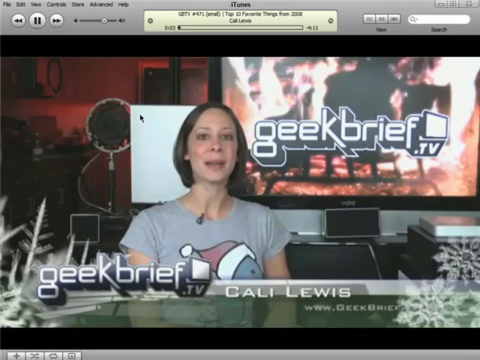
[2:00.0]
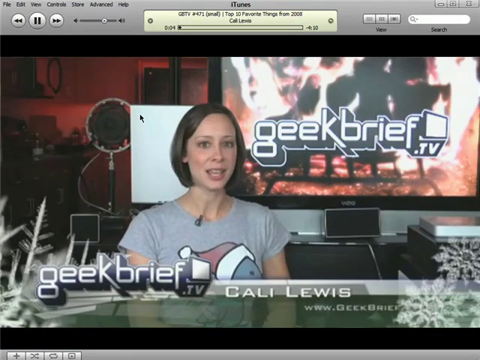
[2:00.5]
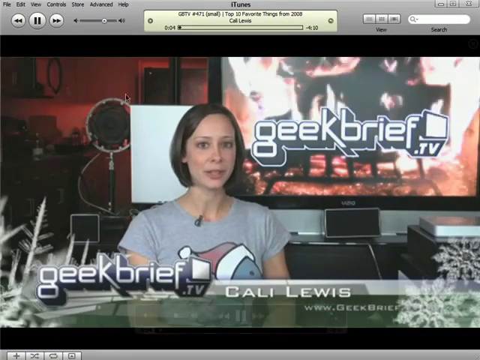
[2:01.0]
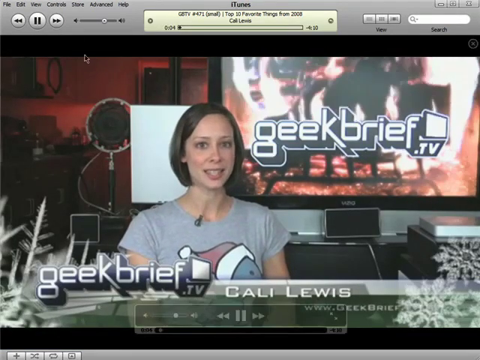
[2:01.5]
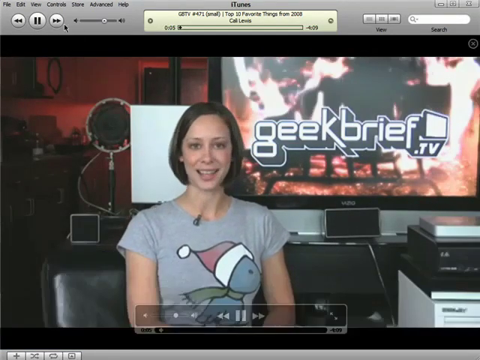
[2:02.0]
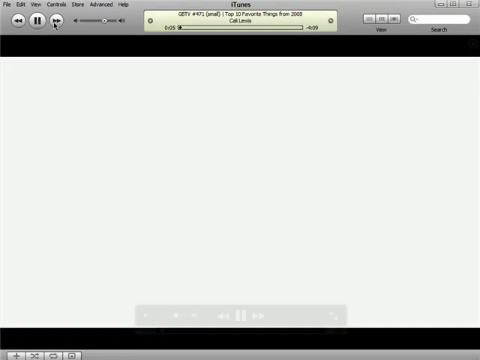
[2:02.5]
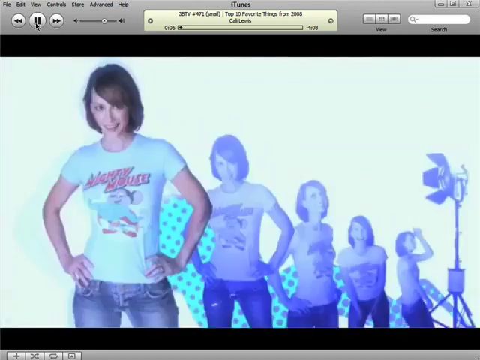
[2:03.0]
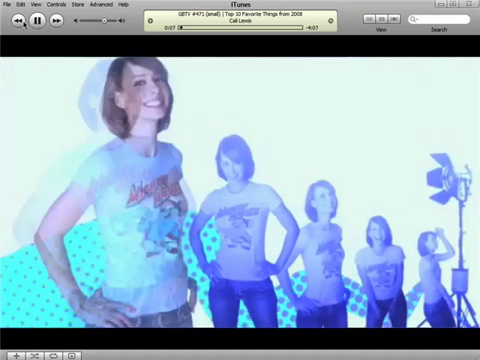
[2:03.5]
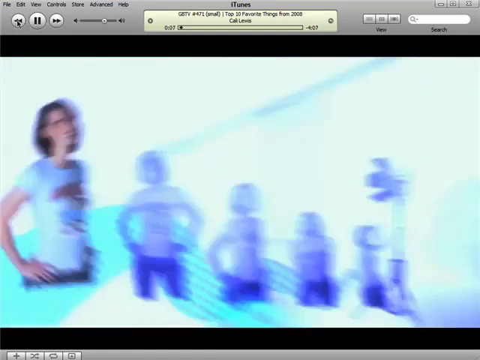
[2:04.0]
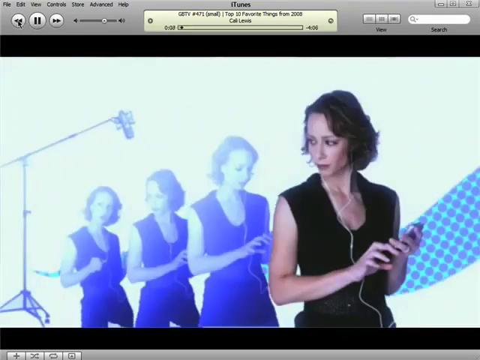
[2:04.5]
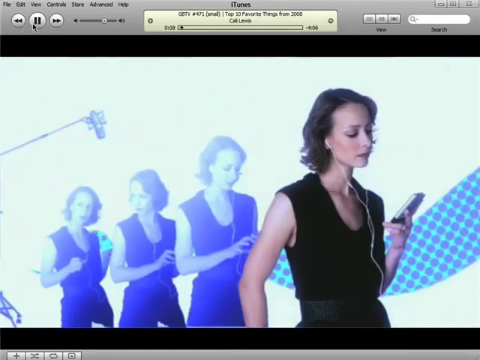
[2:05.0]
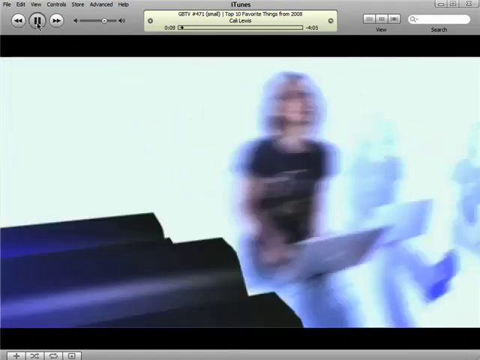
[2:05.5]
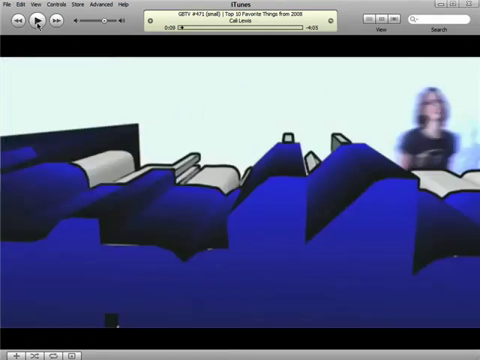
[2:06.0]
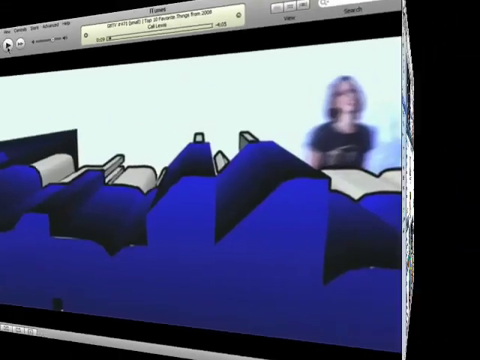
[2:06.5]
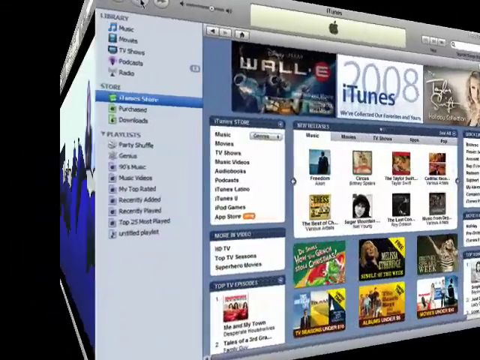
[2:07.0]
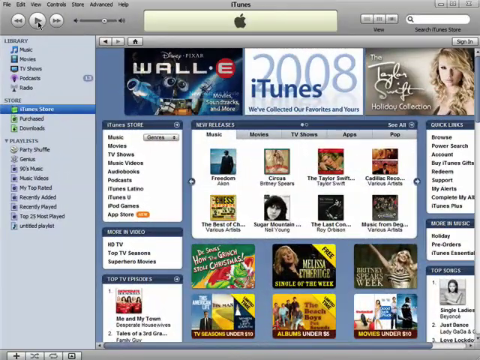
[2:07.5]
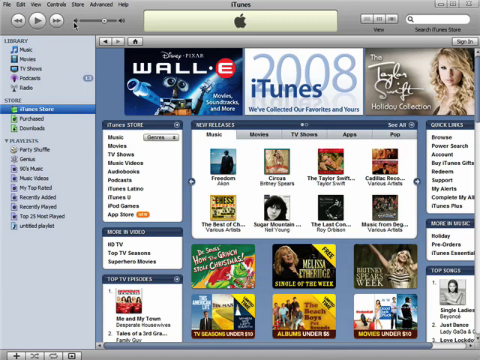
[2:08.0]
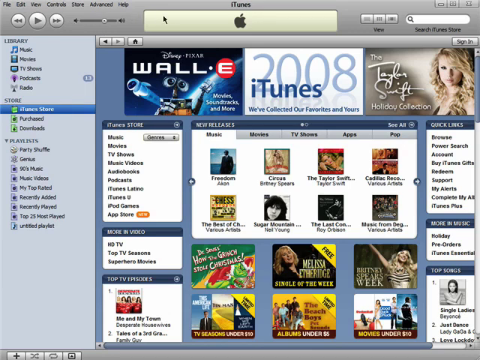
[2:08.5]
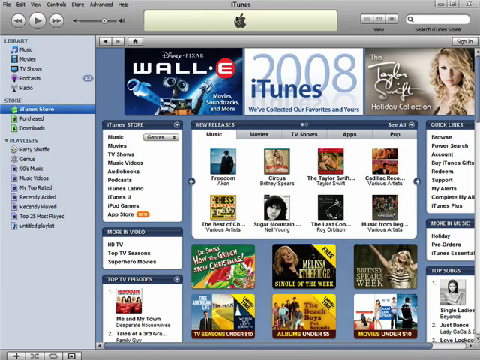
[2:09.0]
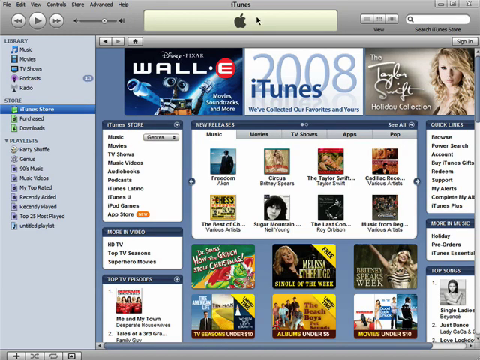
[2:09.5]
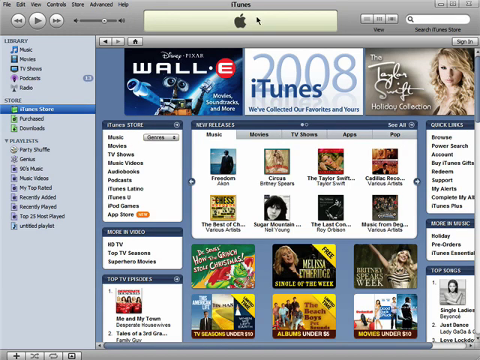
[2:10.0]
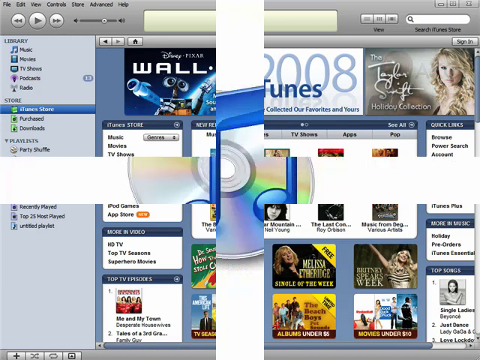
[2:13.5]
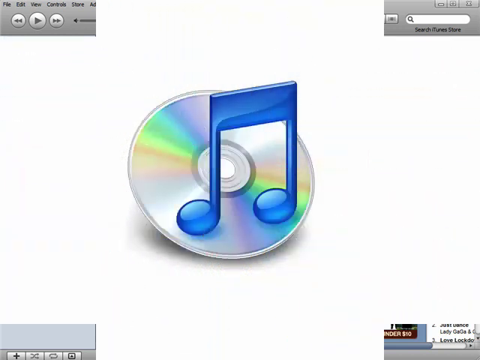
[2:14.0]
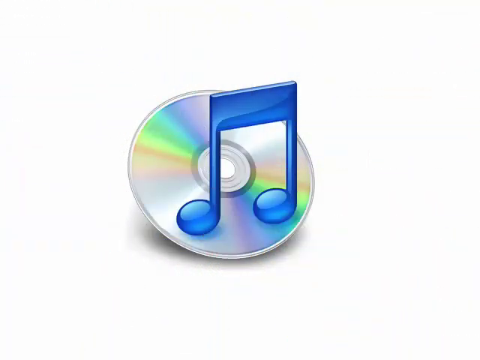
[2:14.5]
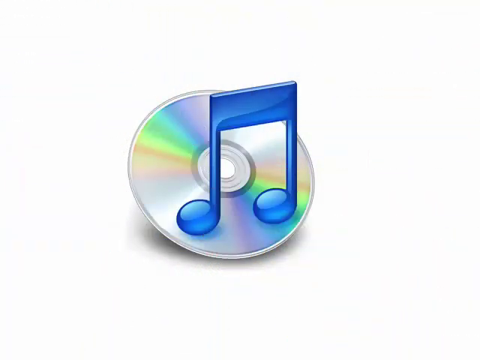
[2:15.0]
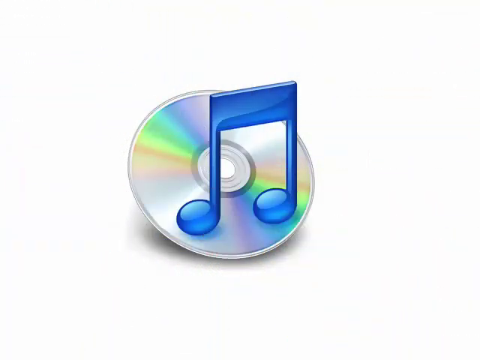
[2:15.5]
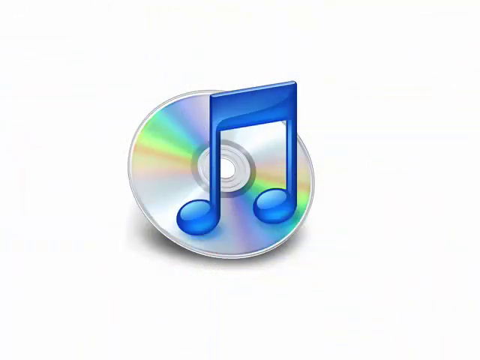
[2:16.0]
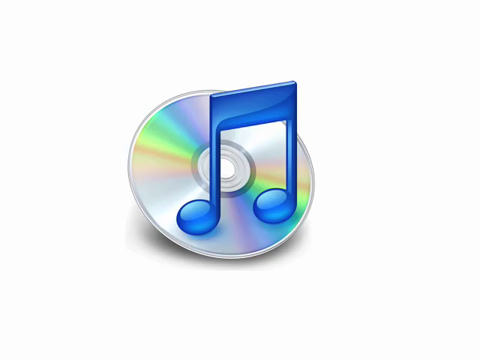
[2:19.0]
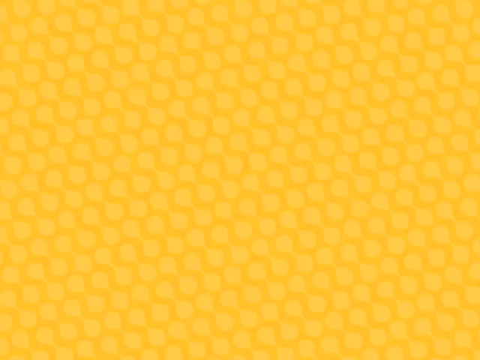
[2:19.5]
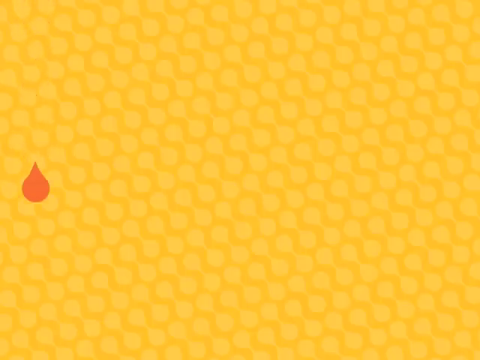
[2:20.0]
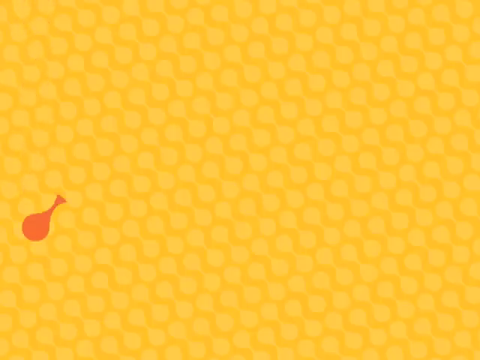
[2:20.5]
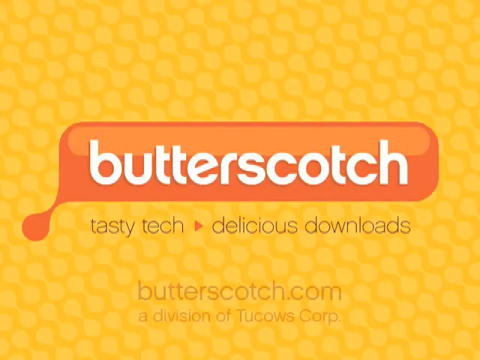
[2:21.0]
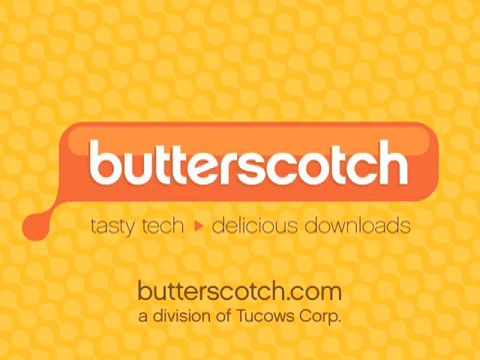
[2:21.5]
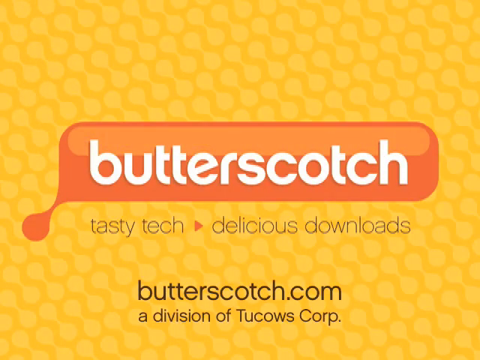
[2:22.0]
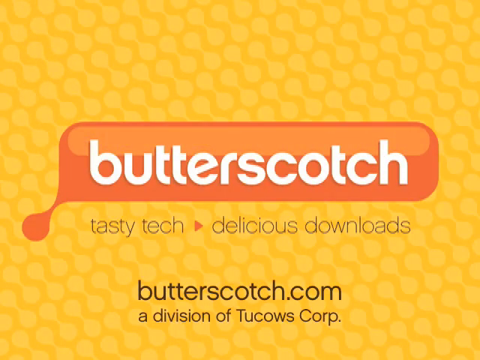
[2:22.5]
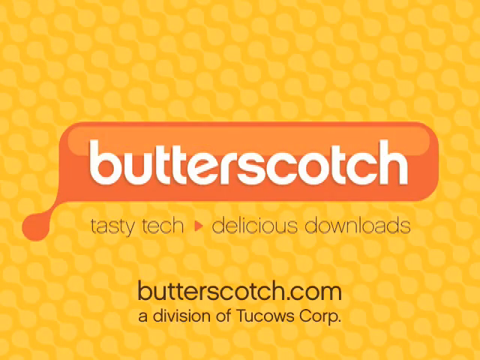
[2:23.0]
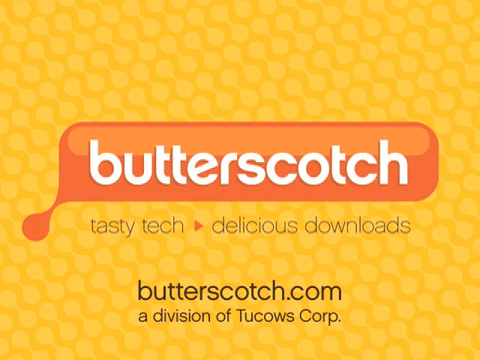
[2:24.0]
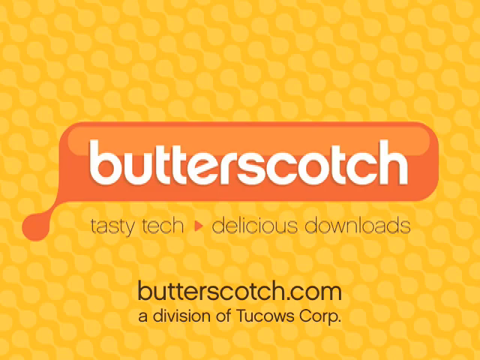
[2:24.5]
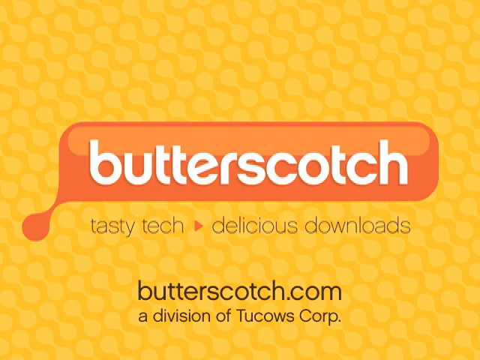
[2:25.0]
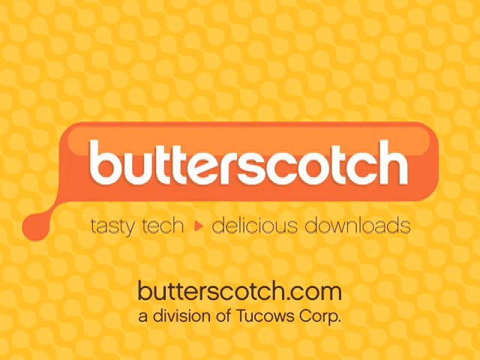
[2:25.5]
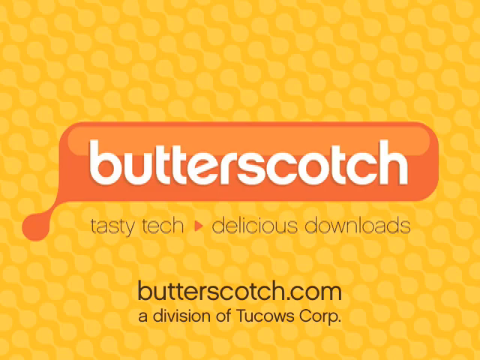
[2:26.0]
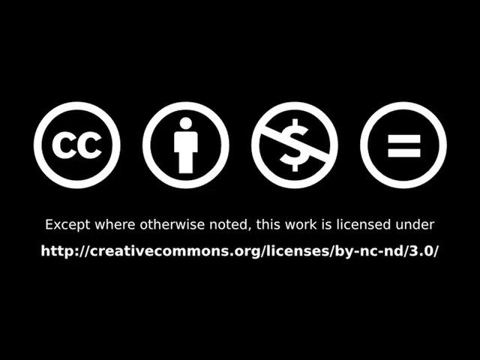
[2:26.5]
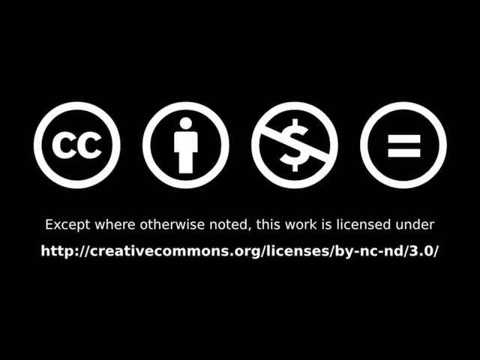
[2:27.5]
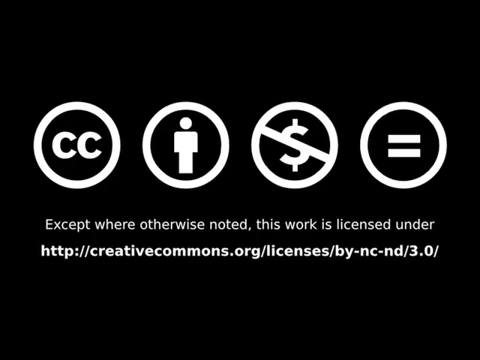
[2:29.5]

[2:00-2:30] The selected video plays within the podcast section of the iTunes store, showing a person talking and the text "geek brief TV Callie Lewis." A woman in a short-sleeved gray shirt has short, maybe medium-length, brown hair parted in the middle. Behind her is a screen that says "geek brief" with a bright graphic that almost looks like it is flaming, possibly meant to be a Yule log, as she is wearing a kind of Christmas-themed shirt with a character in a Christmas hat on it. Then what looks to be an intro screen appears, showing several different images of the woman interacting with different technologies, apparently the title screen for her geek brief show. After that, the video goes back to the home page again, which says "butterscotch tasty tech delicious downloads" on the same orange background seen at the start.